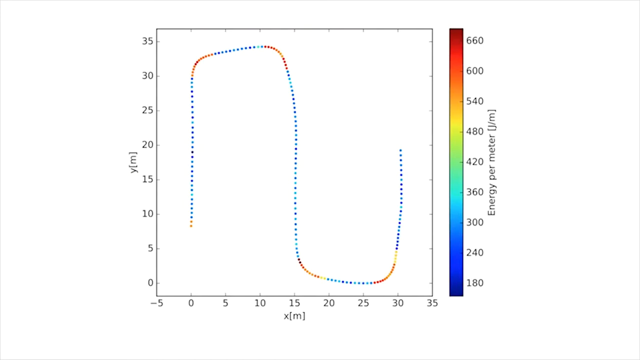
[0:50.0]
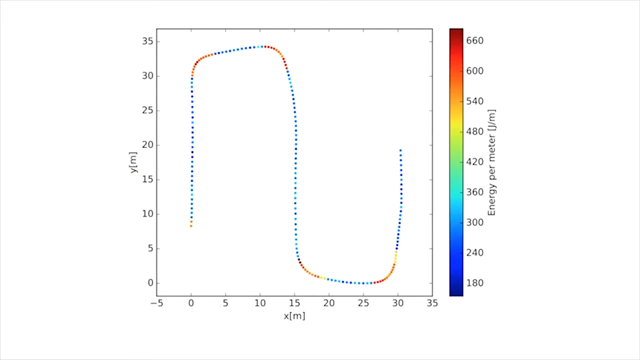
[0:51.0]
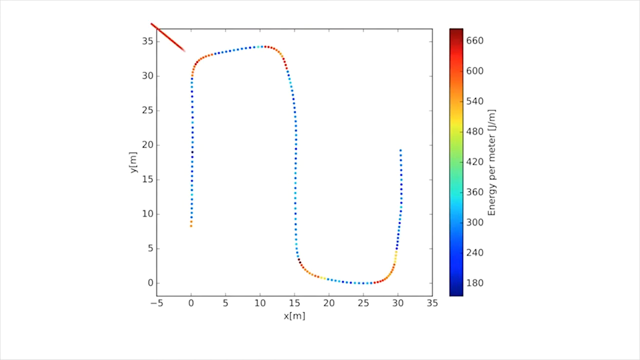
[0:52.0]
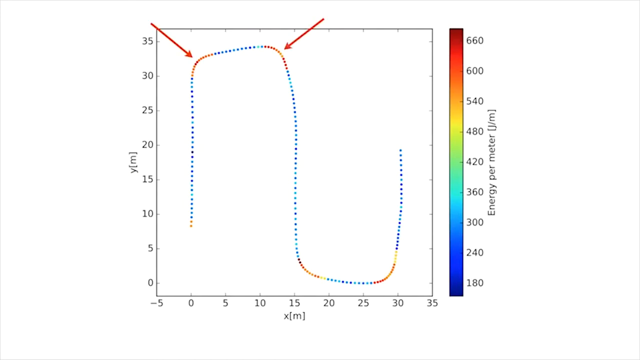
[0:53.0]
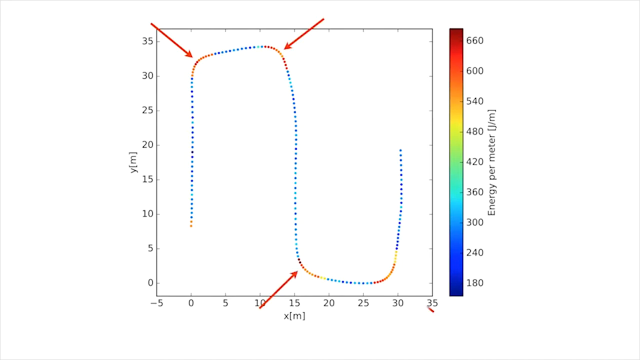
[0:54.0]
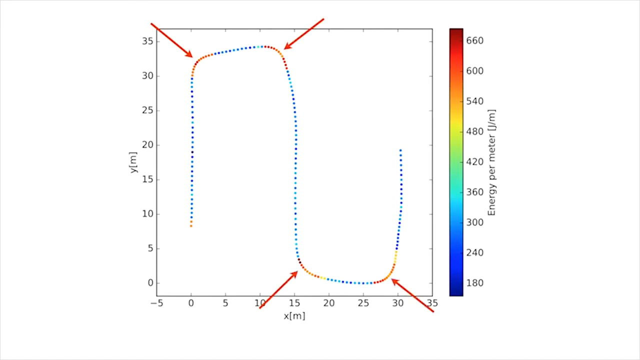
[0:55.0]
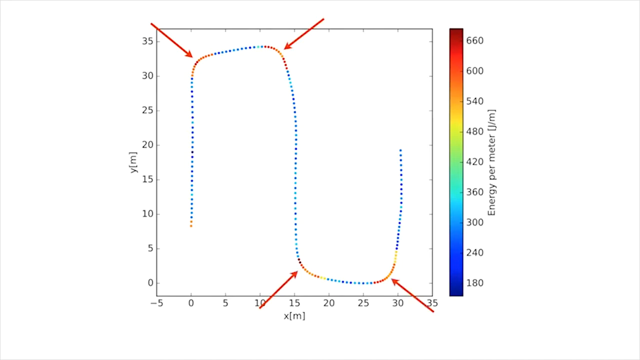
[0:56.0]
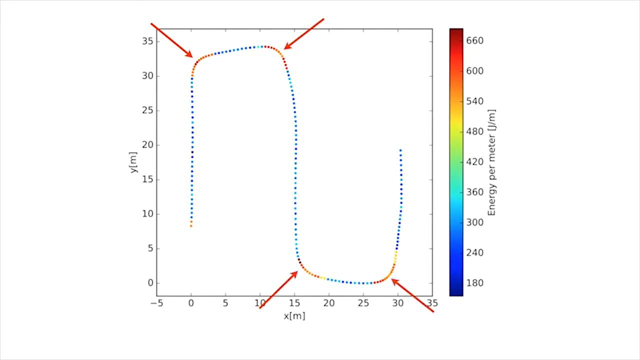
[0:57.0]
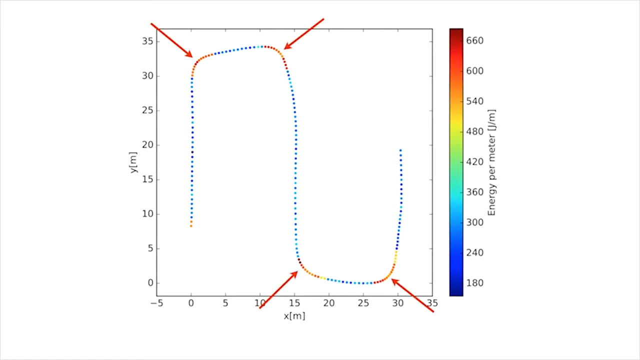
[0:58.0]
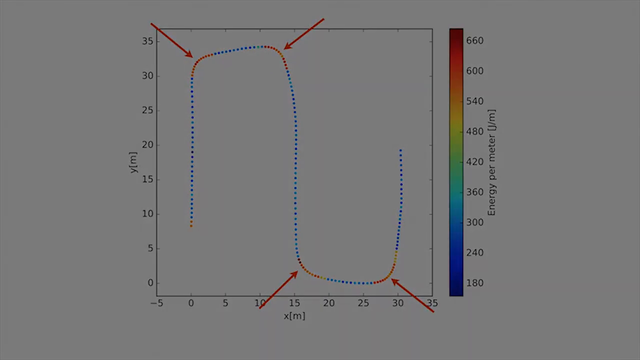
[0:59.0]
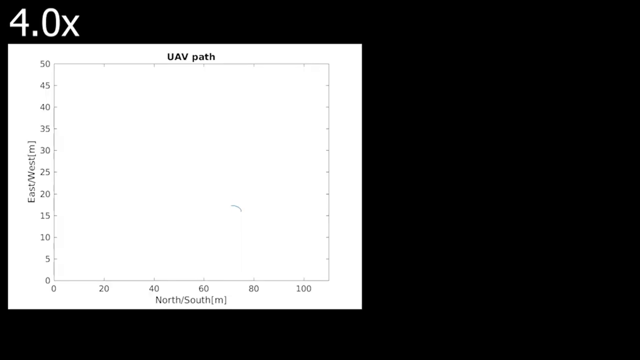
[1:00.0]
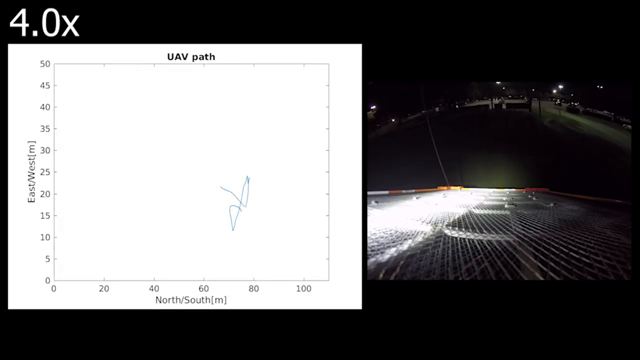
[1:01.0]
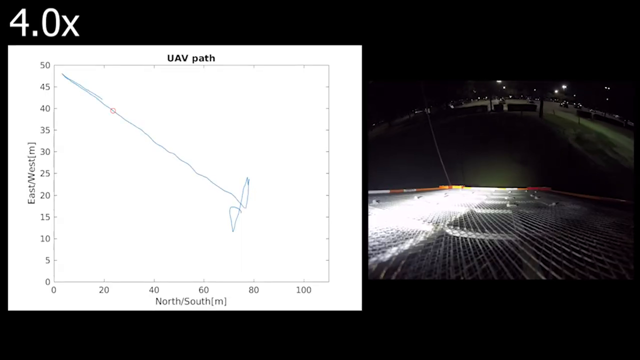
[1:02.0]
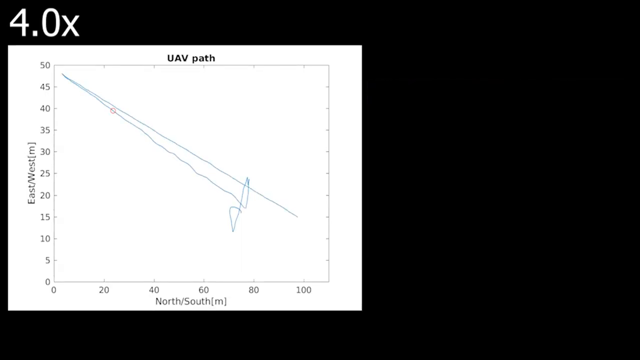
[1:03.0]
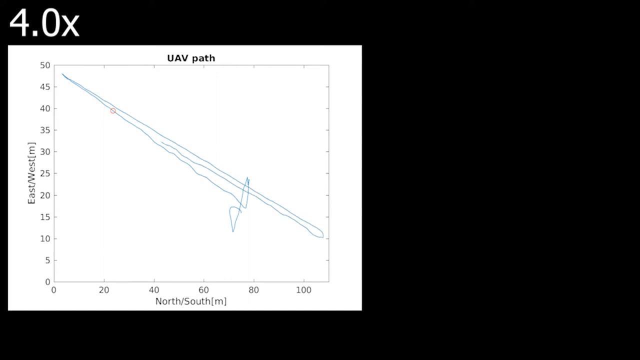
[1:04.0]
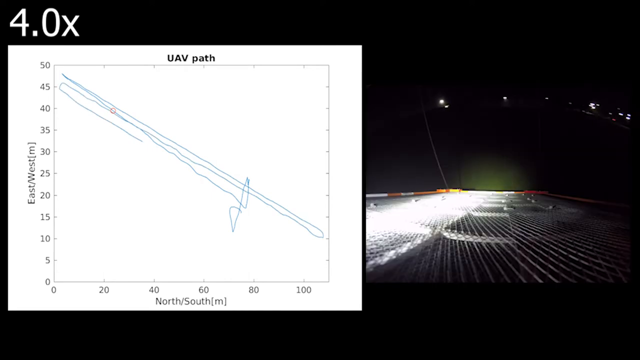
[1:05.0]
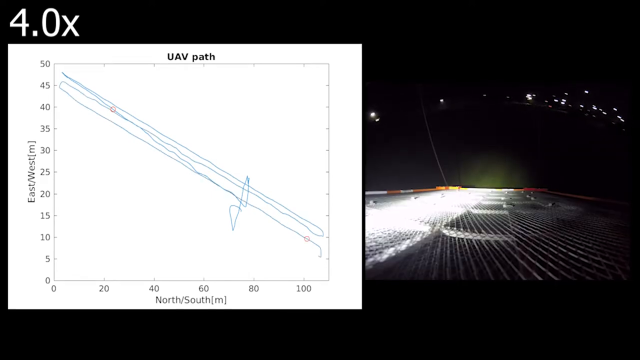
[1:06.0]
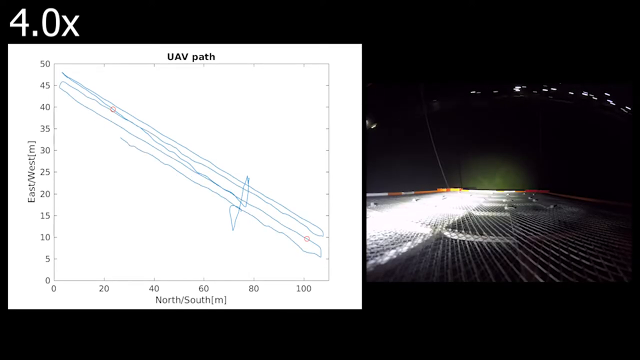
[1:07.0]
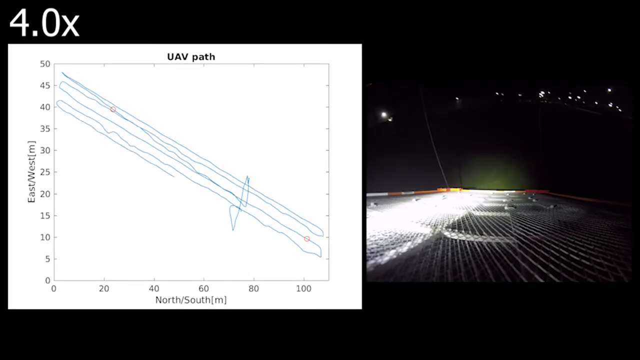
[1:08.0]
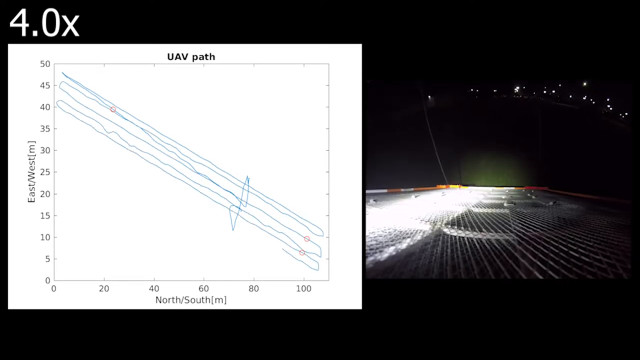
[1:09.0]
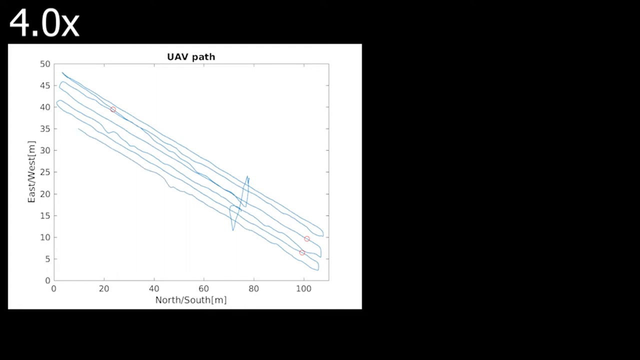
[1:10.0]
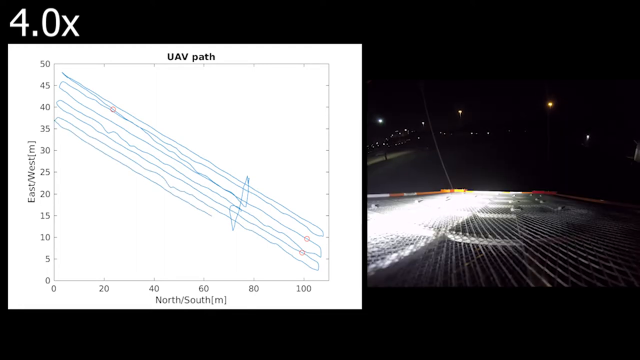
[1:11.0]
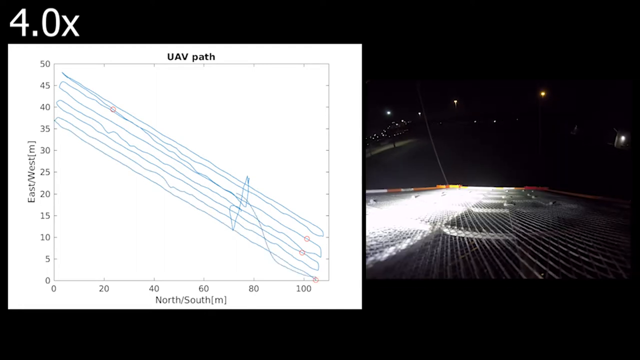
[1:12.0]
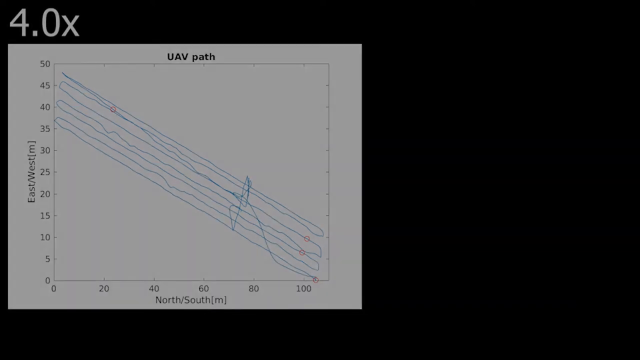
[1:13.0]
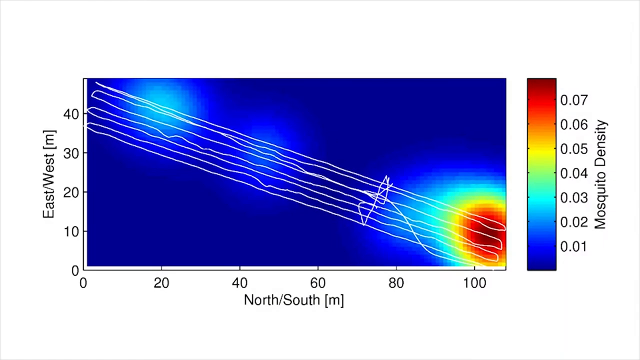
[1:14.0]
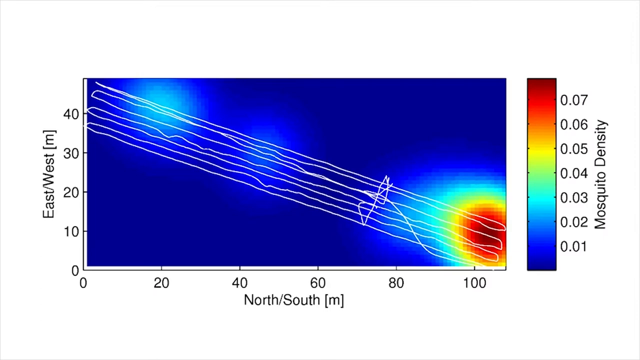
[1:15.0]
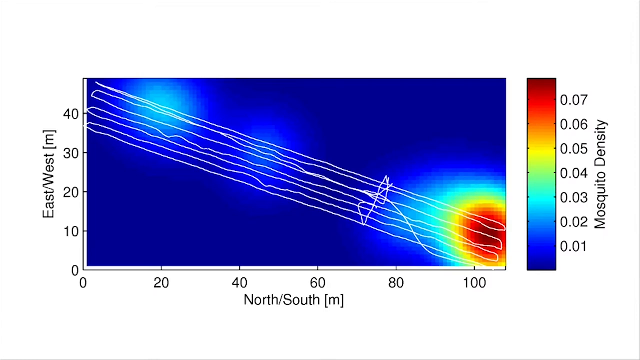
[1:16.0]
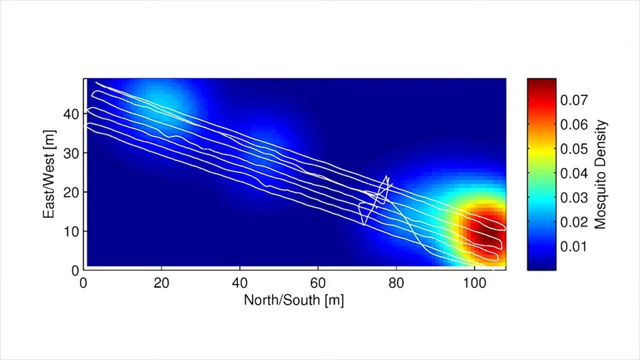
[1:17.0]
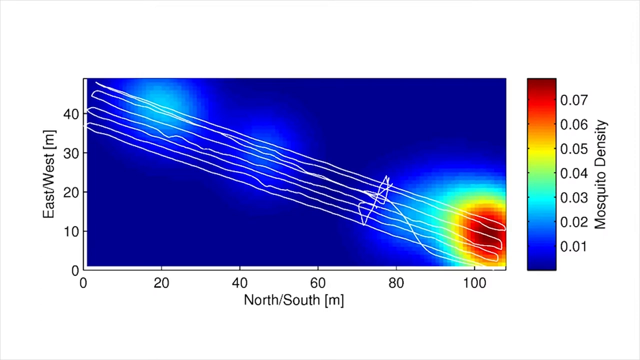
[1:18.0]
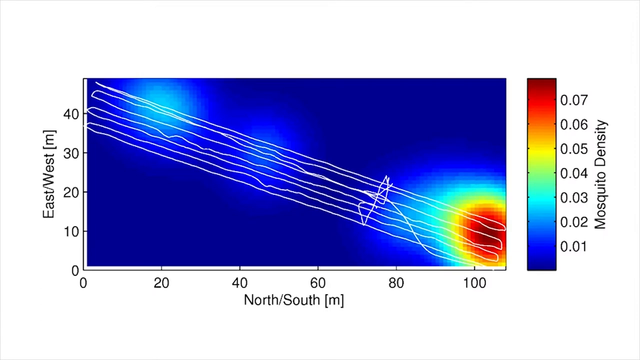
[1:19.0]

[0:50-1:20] The graph continues on the white background. On the left side the y-axis is labeled "y (m)" and runs vertically from 0 up through 5, 10, 15, 20, 25, 30. The horizontal x-axis is labeled "x (m)" and runs left to right from -5 through 0, 5, 10, 15, 20, 25, 30, 35. On the right side it says "energy per meter"; the dark blue at the bottom says 180 and the red at the top says 620. Two arrows point at the top, at the peak, and two arrows point at the very bottom, the lowest point, at the beginning and the end. Another graph appears, titled "UAV path," with the left axis labeled east-west in meters and the x-axis labeled "north/south" in meters. Its lines run diagonally from the upper left corner down to the right corner. Another graph is labeled "mosquito density," again with north-south on the x-axis and a similar label on the y-axis.